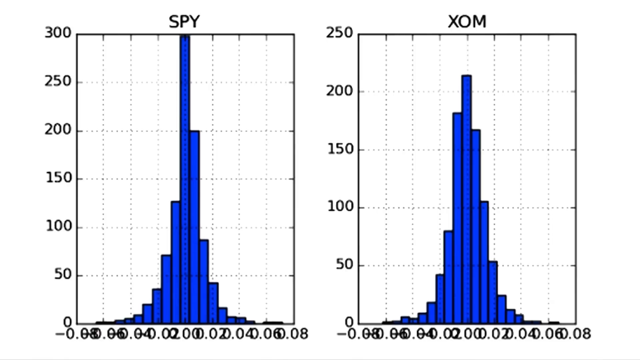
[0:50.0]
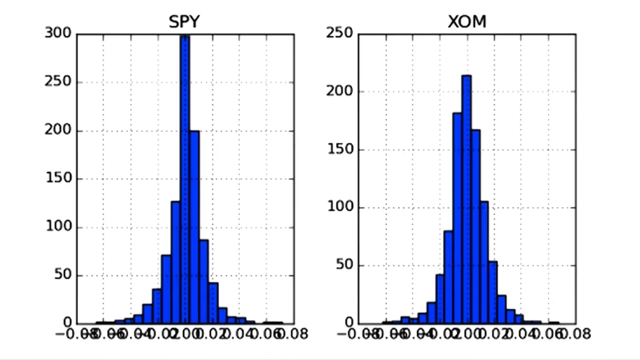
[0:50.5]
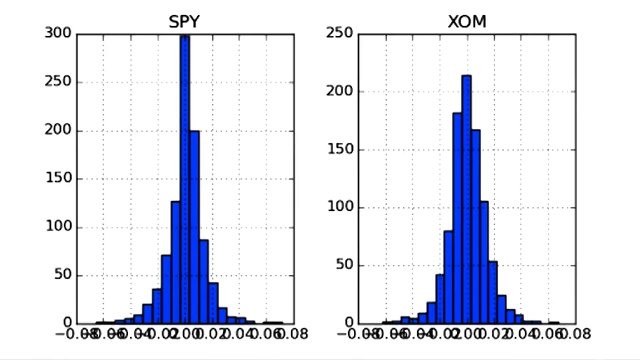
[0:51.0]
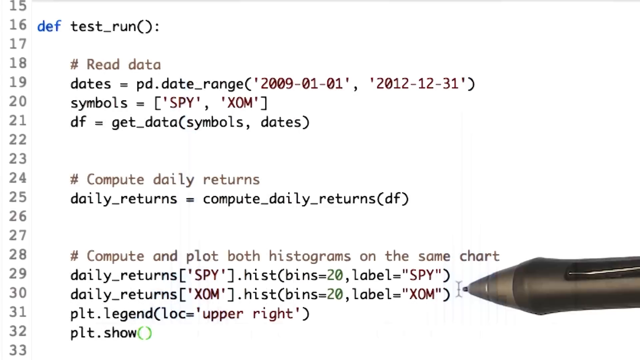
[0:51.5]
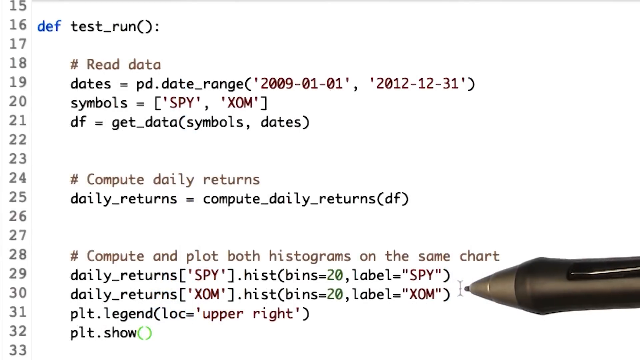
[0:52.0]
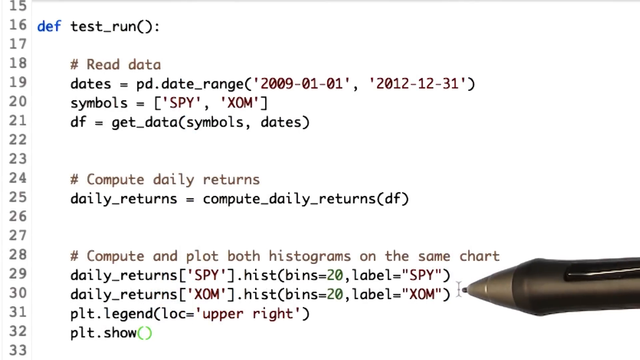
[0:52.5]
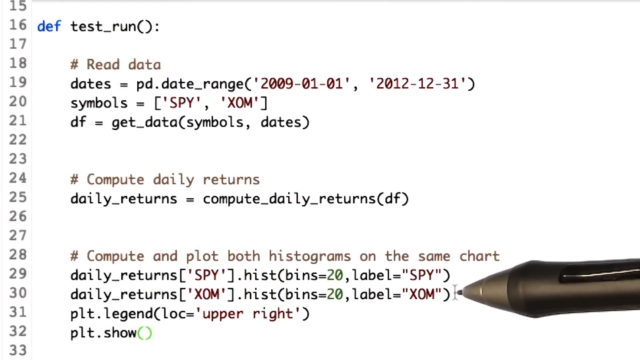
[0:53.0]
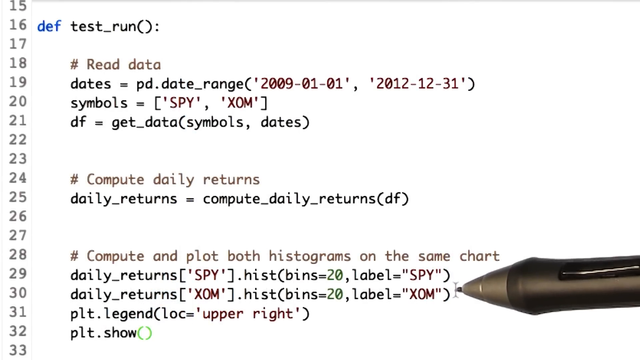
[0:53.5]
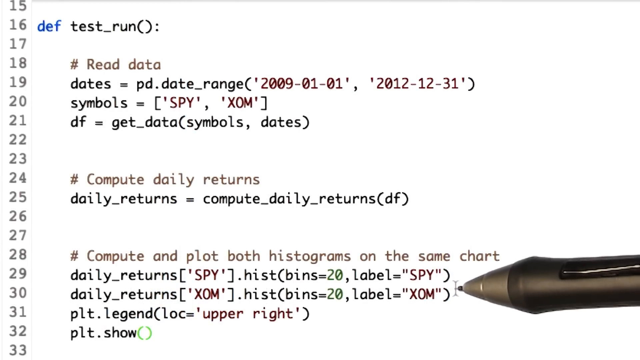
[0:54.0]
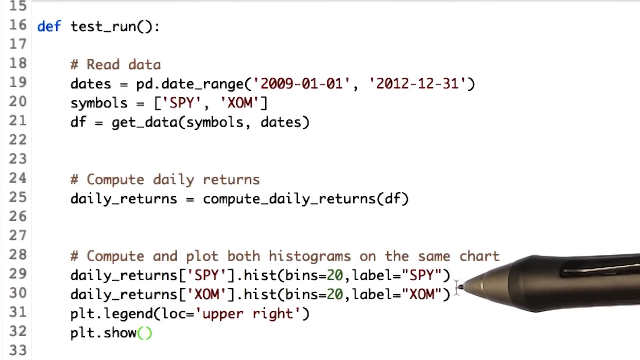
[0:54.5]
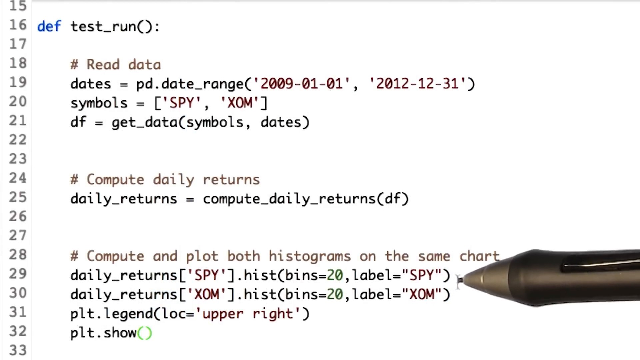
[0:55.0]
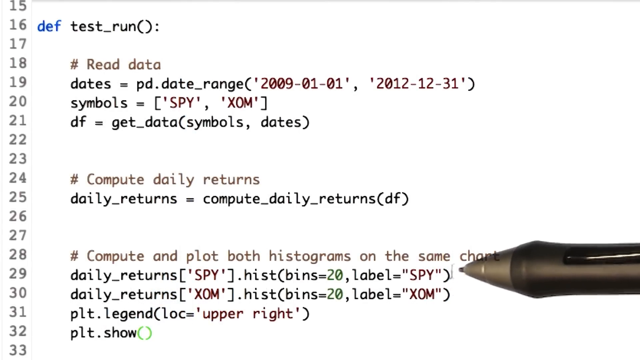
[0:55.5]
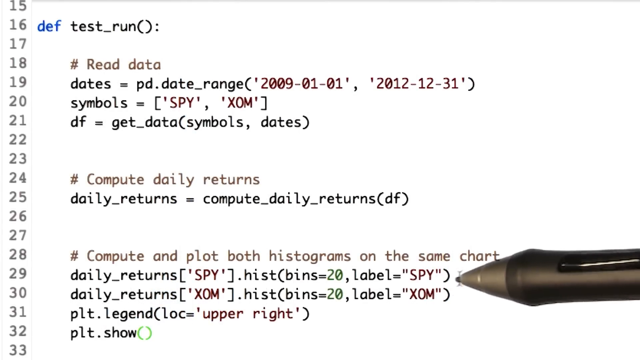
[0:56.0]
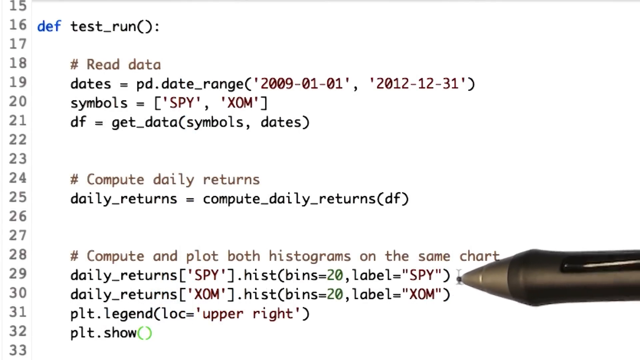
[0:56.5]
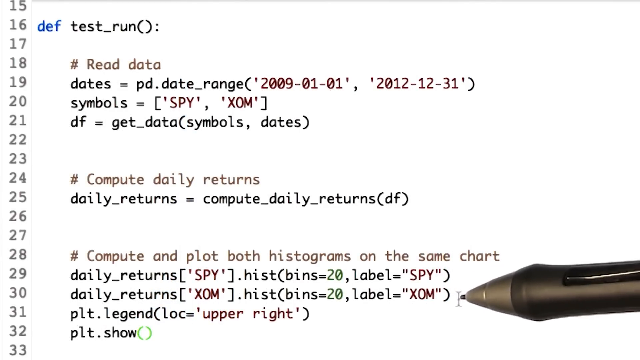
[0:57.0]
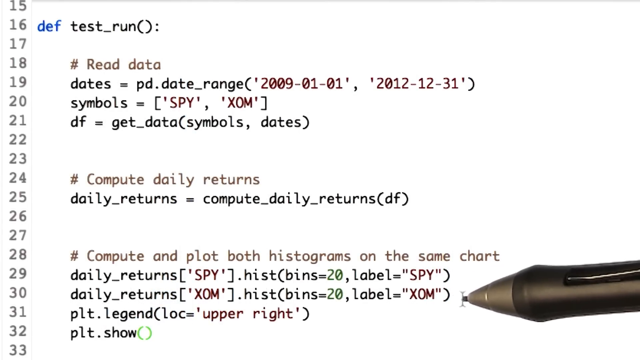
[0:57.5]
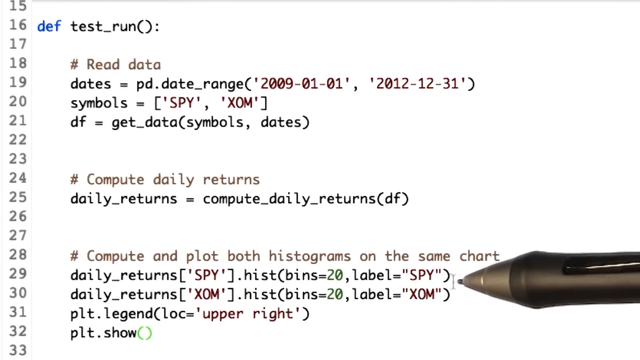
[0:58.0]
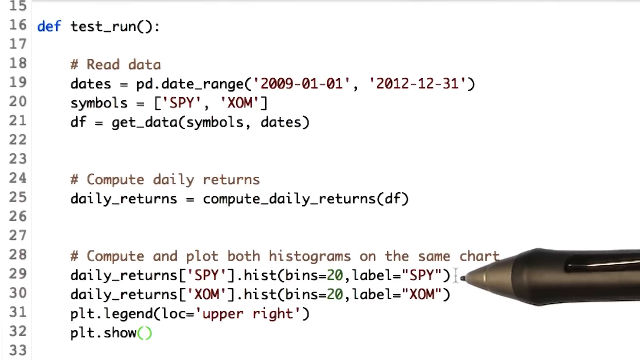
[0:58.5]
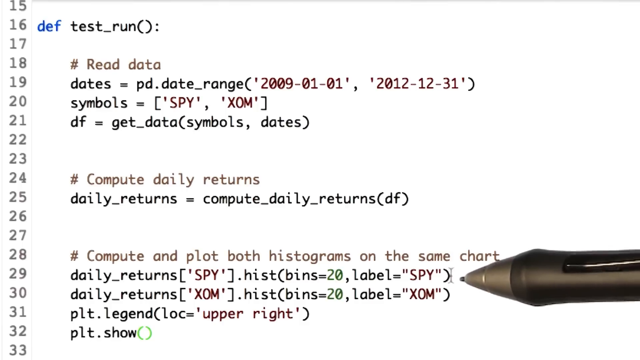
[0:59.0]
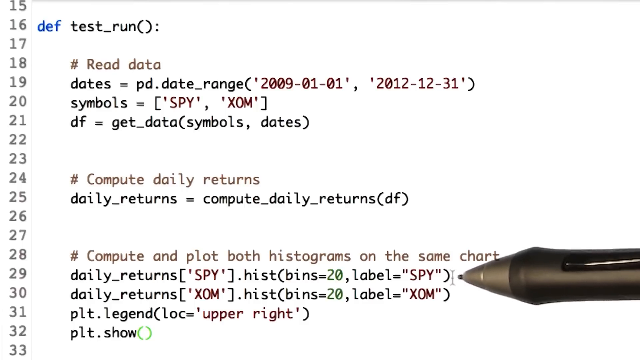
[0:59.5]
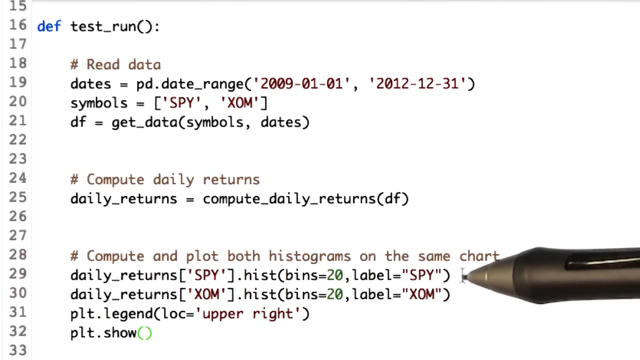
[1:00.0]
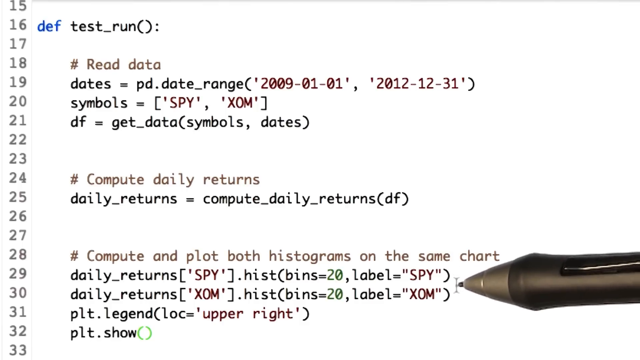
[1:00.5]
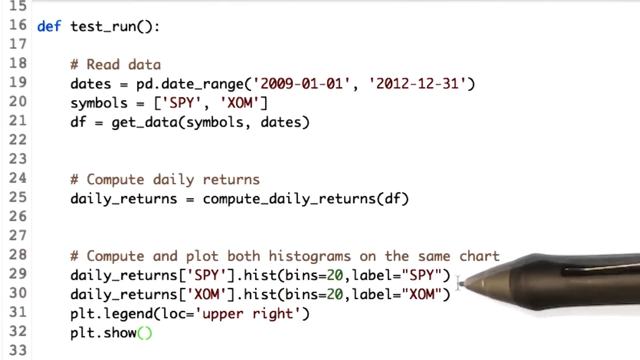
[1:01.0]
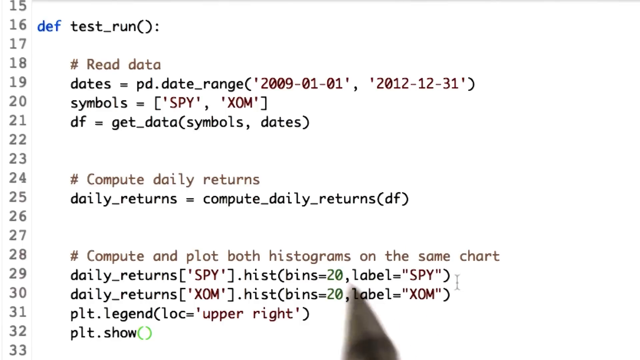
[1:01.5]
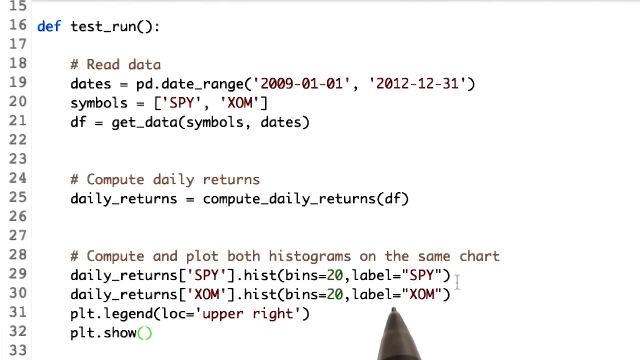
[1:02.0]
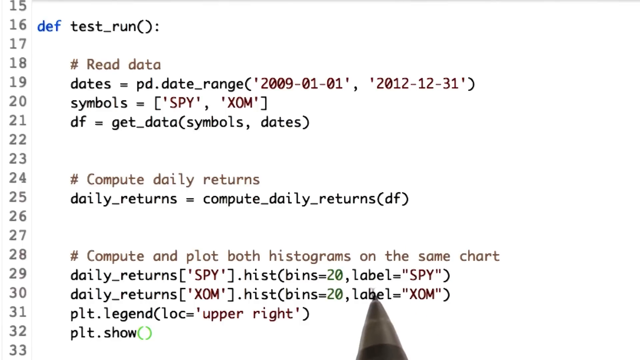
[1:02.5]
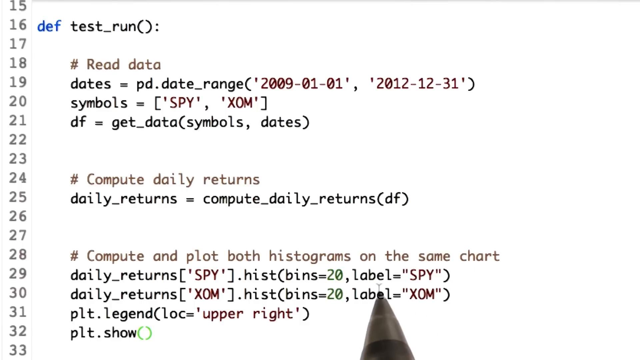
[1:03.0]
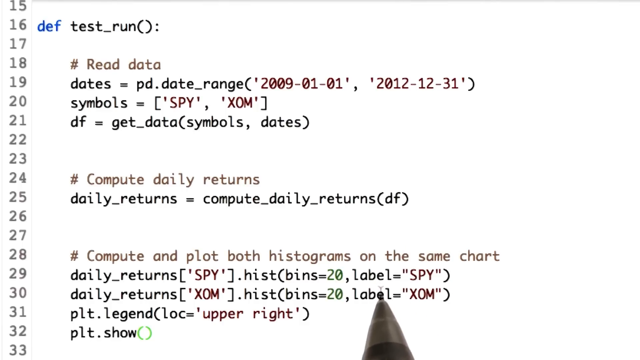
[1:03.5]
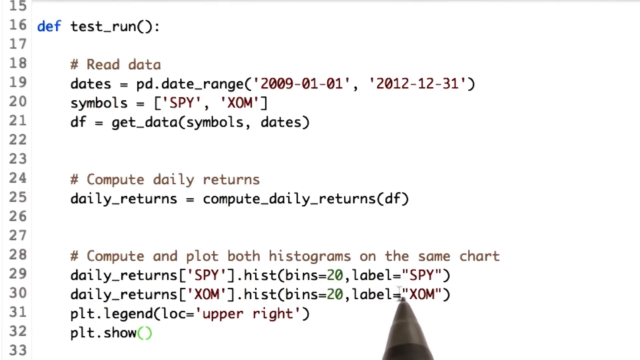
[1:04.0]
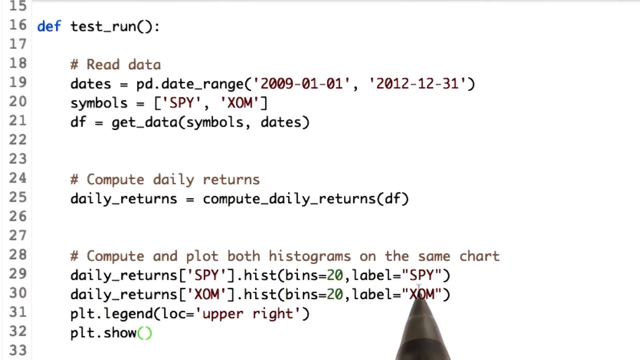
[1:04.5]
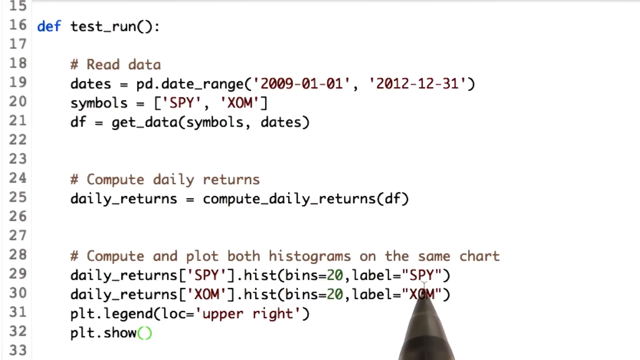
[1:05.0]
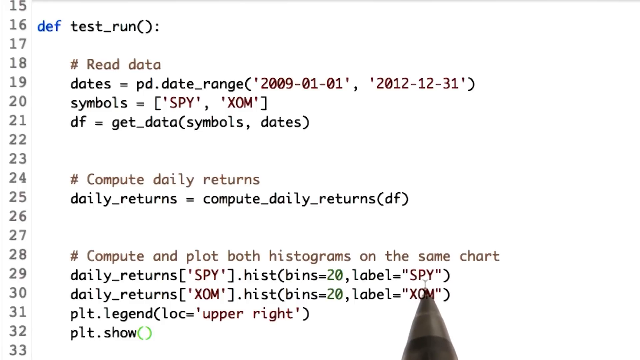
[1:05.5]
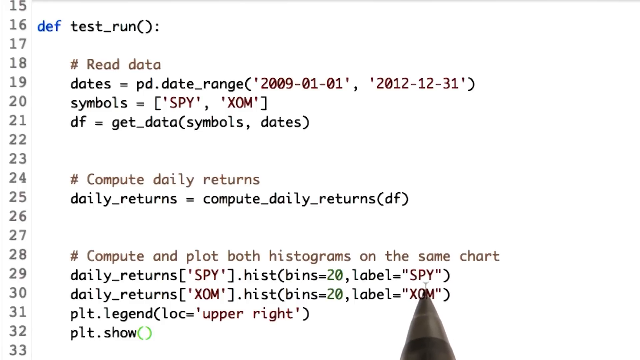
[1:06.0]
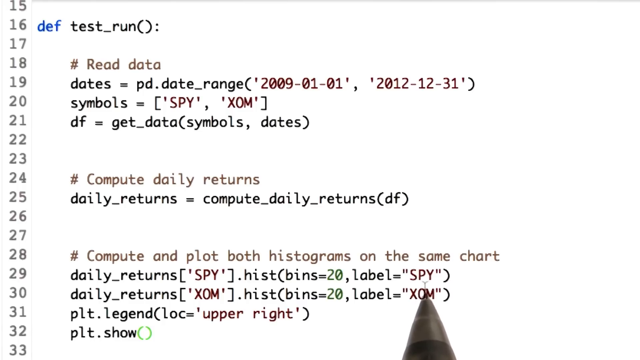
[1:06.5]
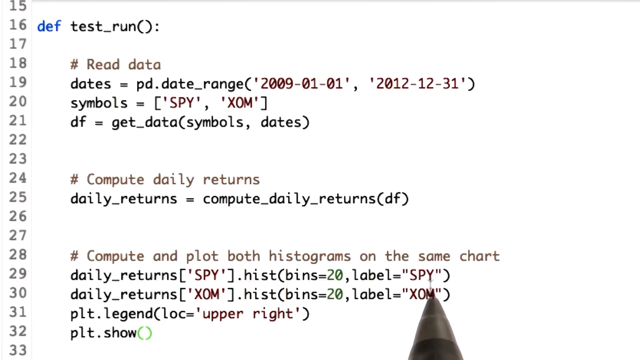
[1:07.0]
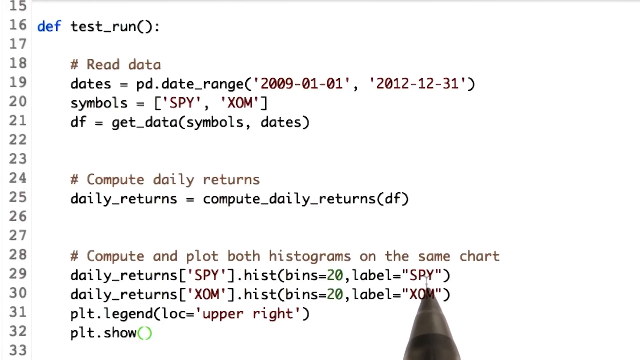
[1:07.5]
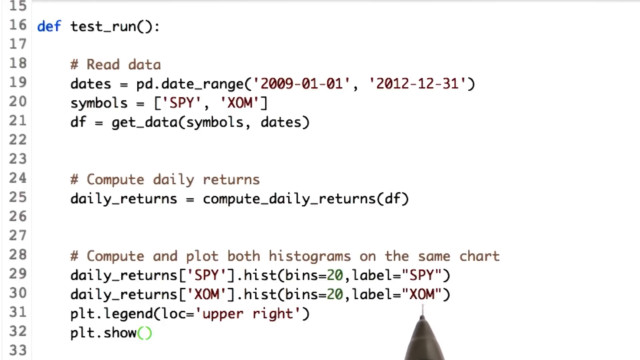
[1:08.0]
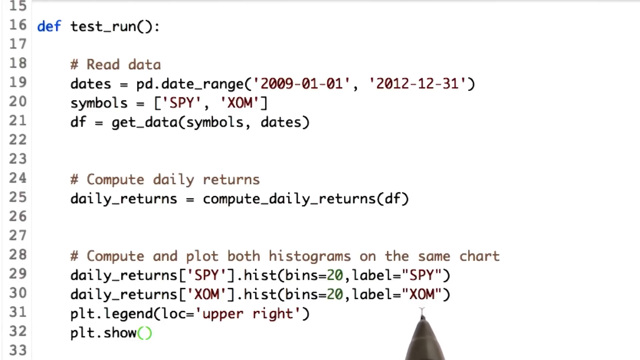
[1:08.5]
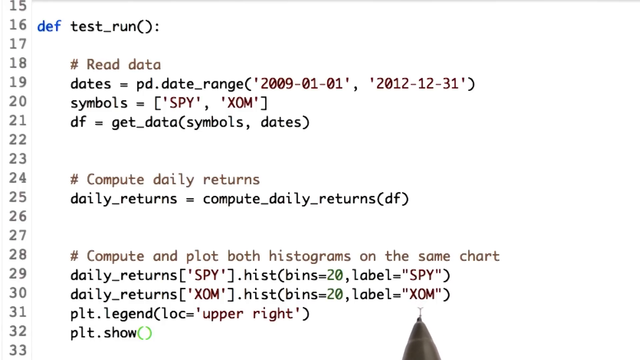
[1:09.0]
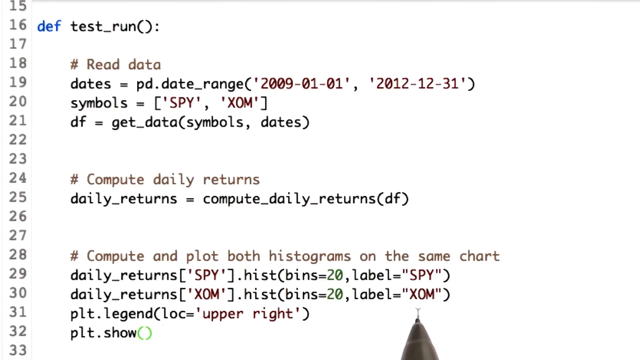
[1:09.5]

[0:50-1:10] The two bar charts fade out, returning to the code screen, which has moved down a little: the row numbers on the left now read from 15 down to 33. The code is different, with lots of mentions of SPY, XOM and daily returns, and computing these daily returns. This time the pen comes in from the right side of the screen instead of from below; it is a brownish, grayish color and appears not to be translucent. It moves the cursor around two lines of code towards the bottom of the screen, pointing at different pieces of the code, towards the words SPY and XOM. Part of the code says "compute and plot both histograms on the same chart", which presumably created the bar charts shown earlier. Other pieces of the code say things like "read data" and "compute daily returns".